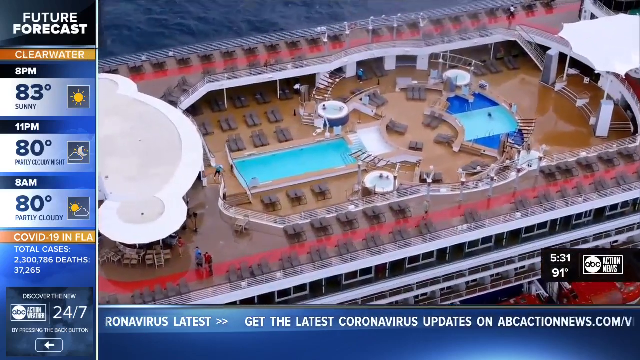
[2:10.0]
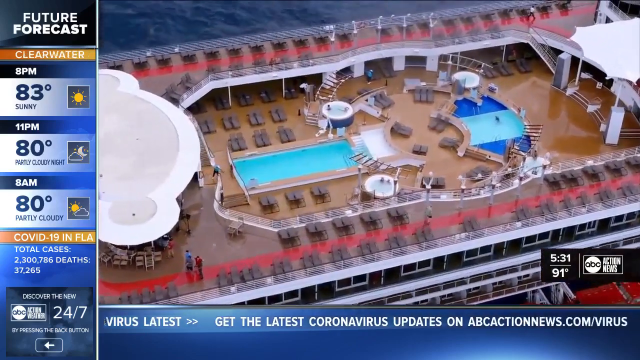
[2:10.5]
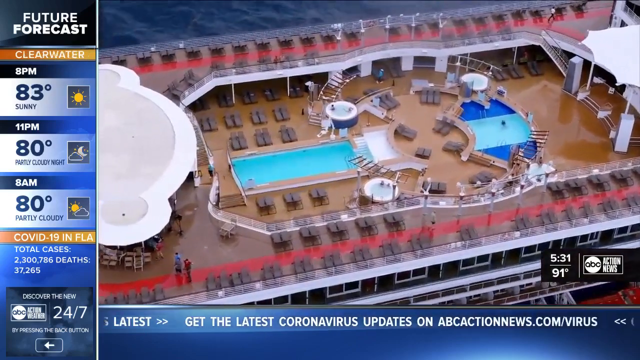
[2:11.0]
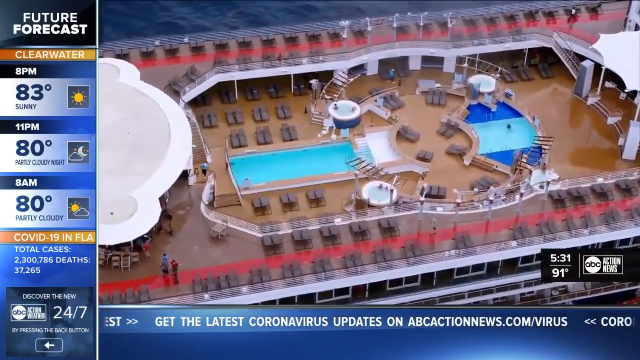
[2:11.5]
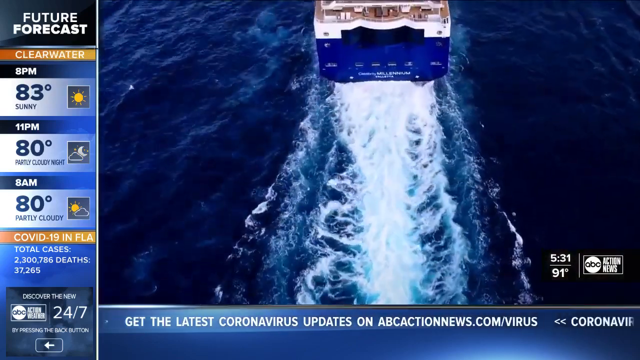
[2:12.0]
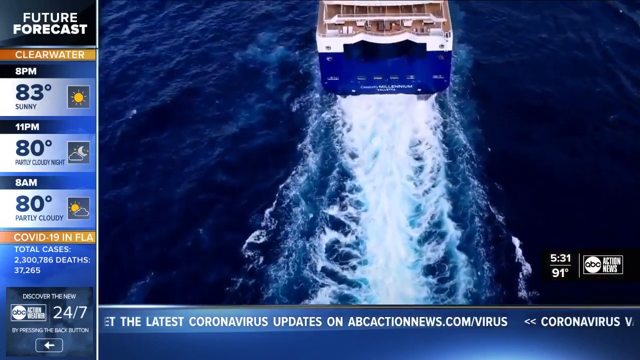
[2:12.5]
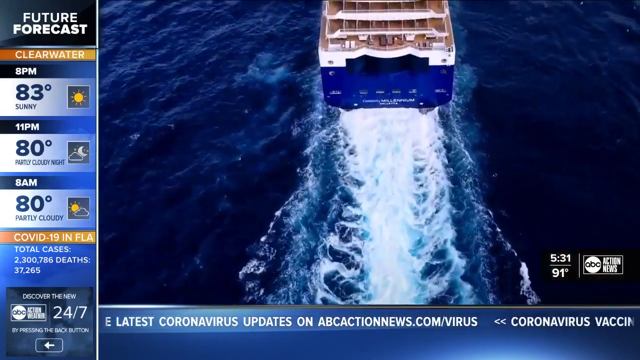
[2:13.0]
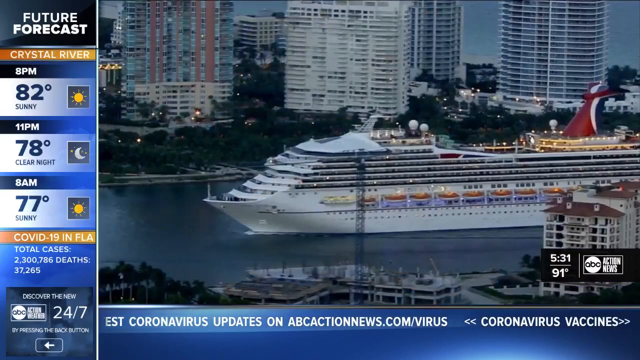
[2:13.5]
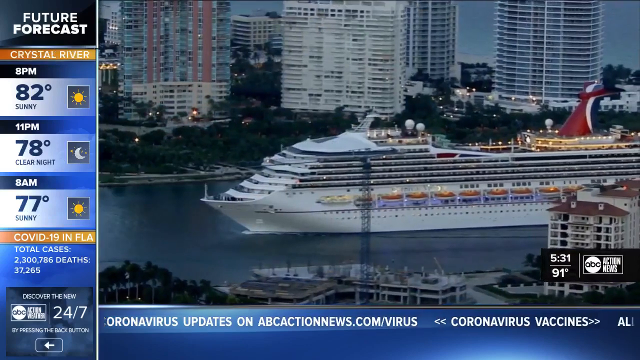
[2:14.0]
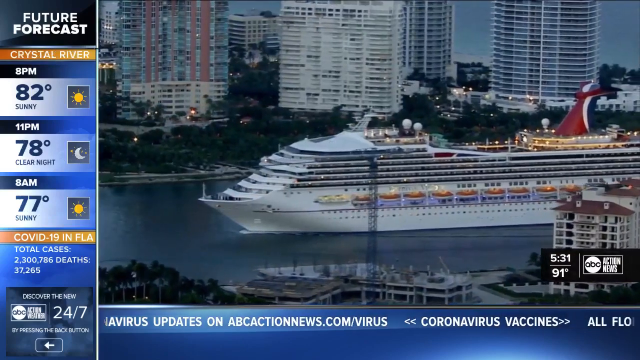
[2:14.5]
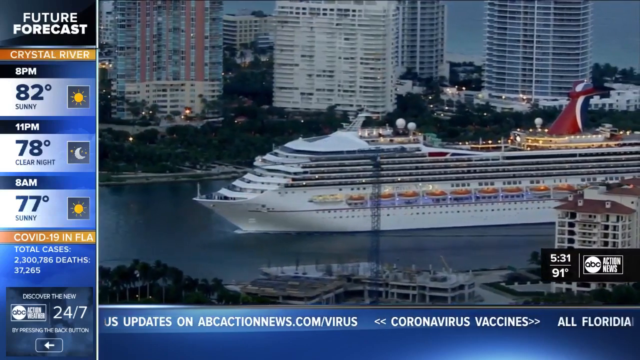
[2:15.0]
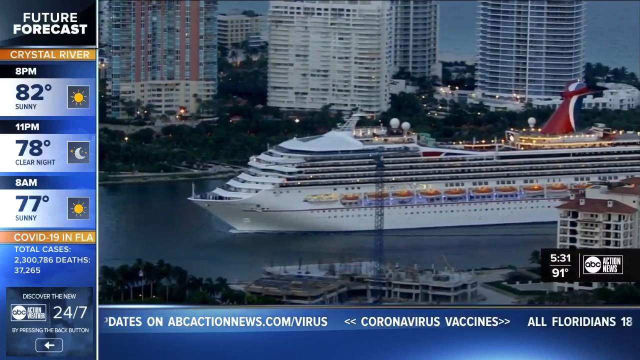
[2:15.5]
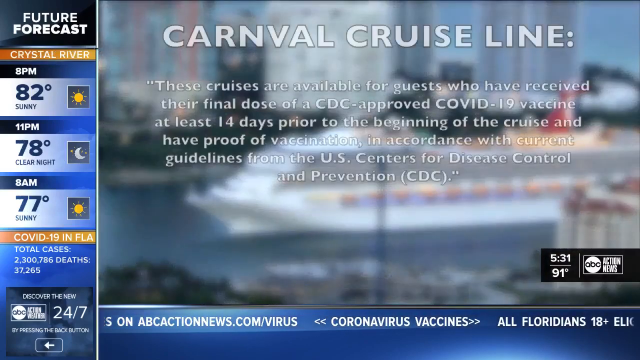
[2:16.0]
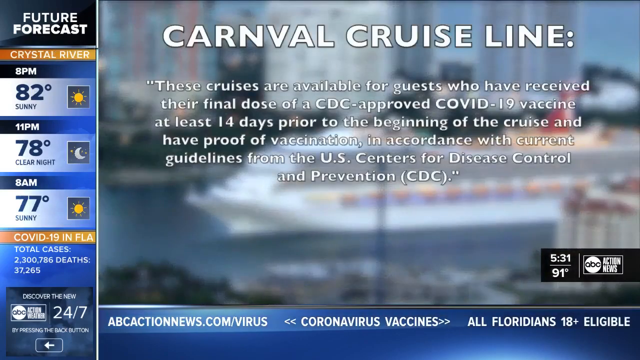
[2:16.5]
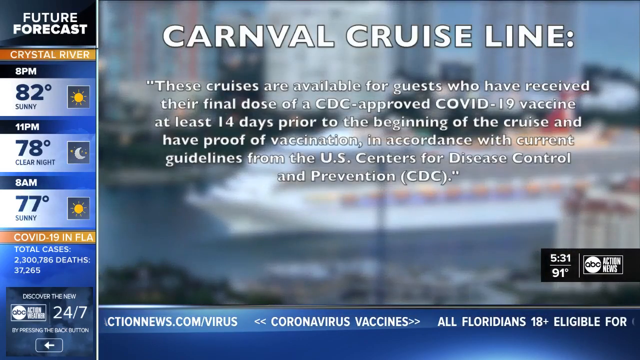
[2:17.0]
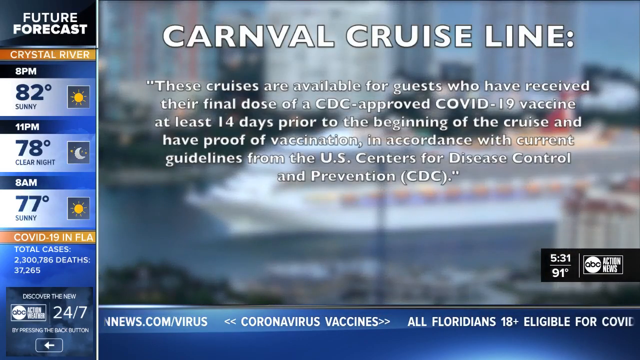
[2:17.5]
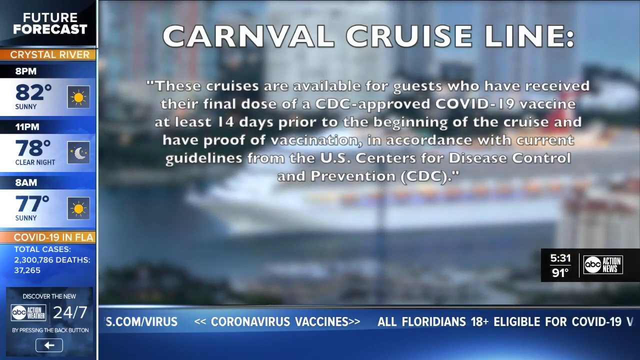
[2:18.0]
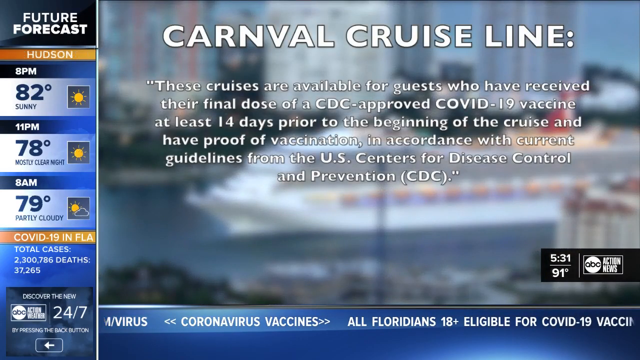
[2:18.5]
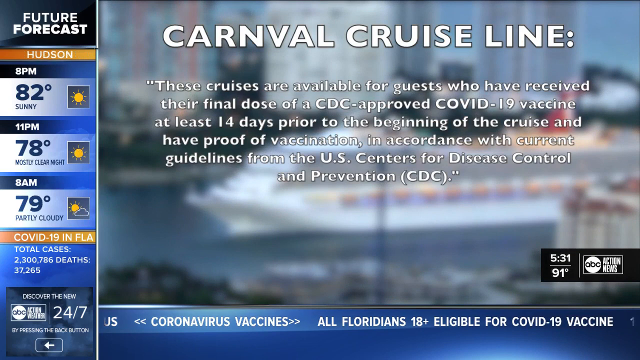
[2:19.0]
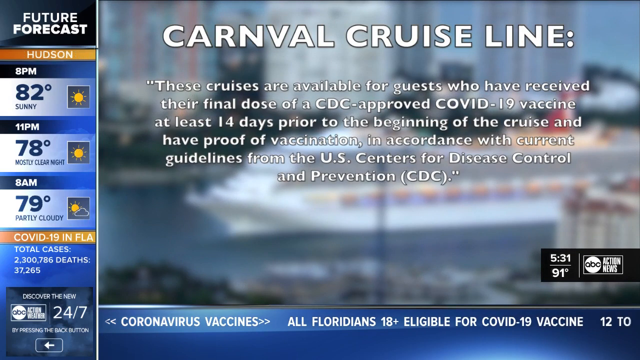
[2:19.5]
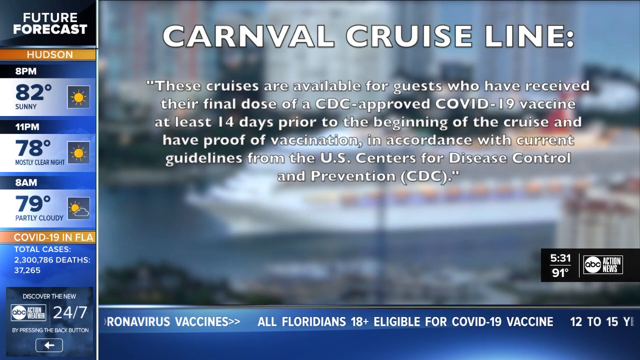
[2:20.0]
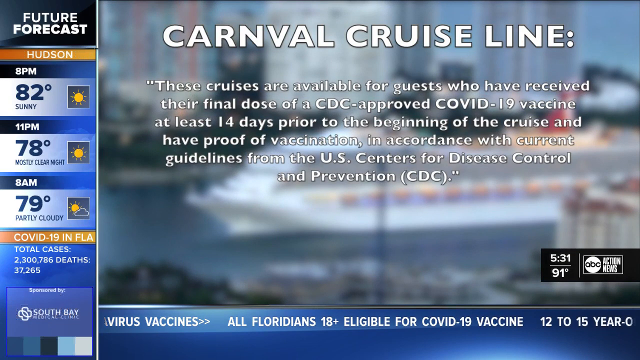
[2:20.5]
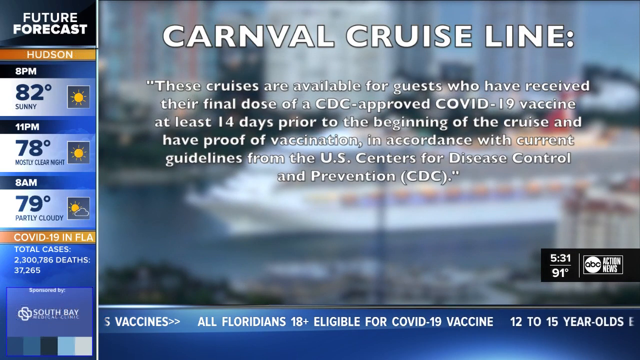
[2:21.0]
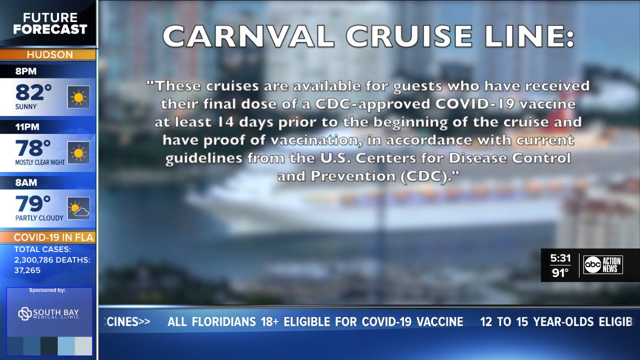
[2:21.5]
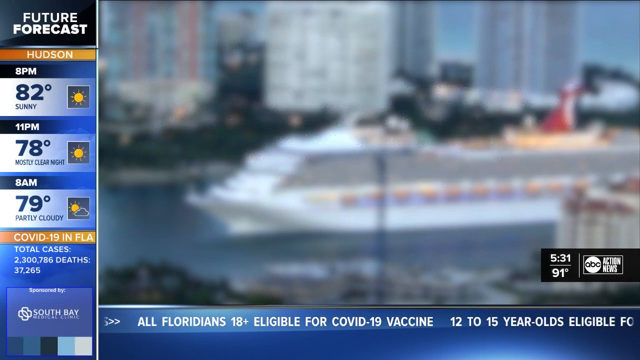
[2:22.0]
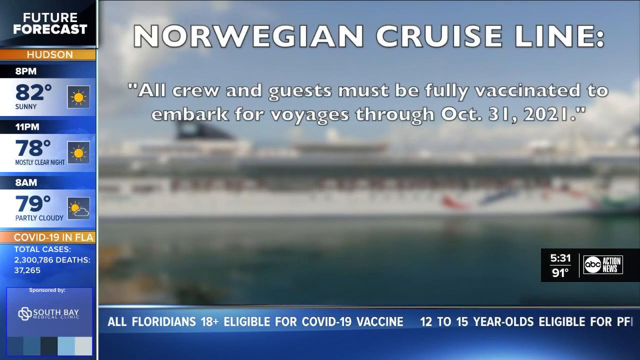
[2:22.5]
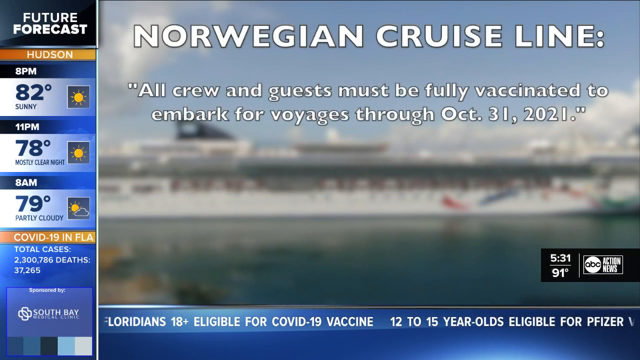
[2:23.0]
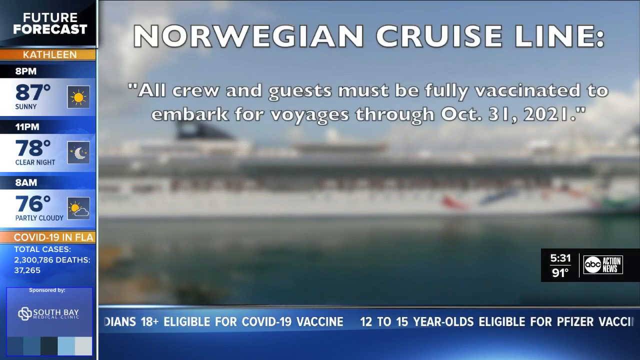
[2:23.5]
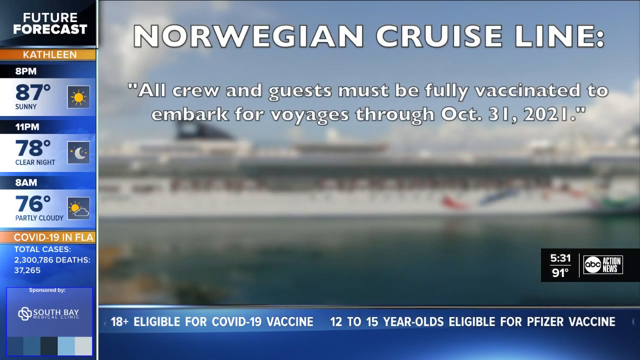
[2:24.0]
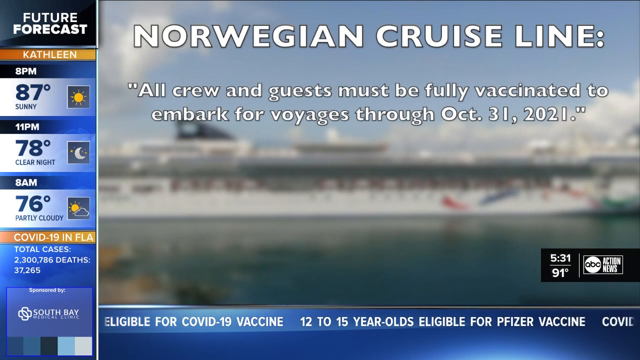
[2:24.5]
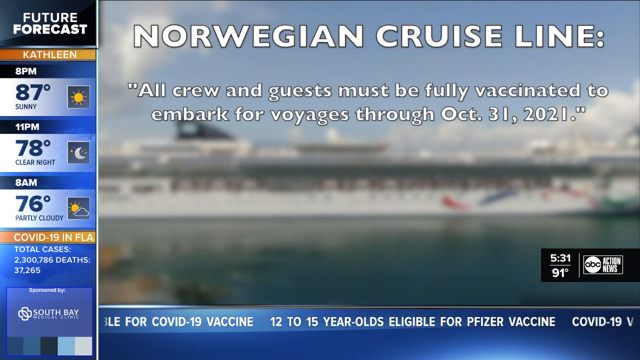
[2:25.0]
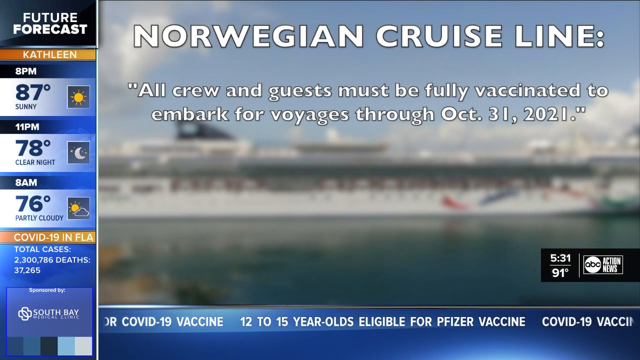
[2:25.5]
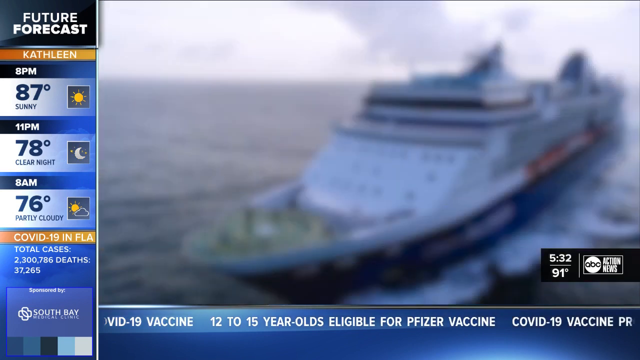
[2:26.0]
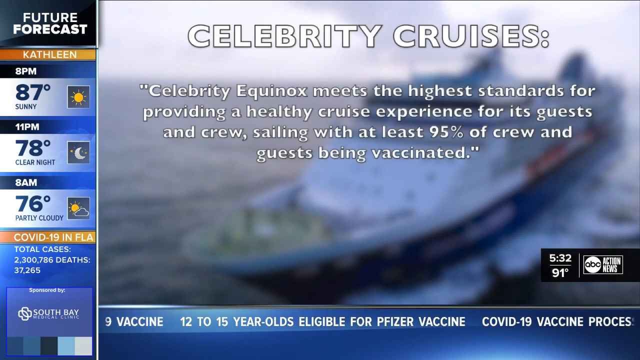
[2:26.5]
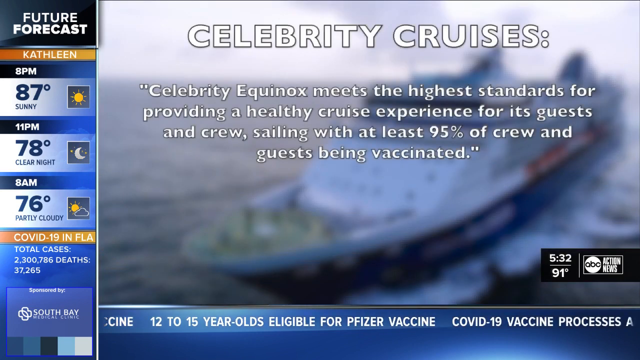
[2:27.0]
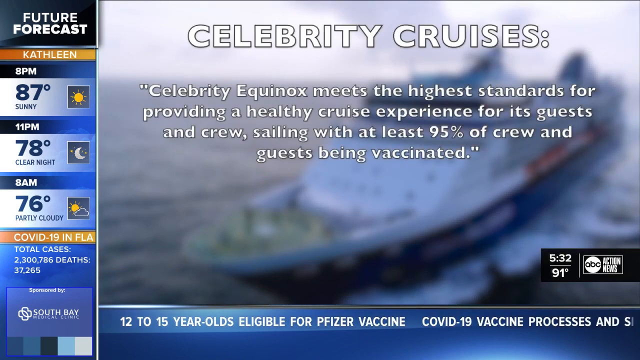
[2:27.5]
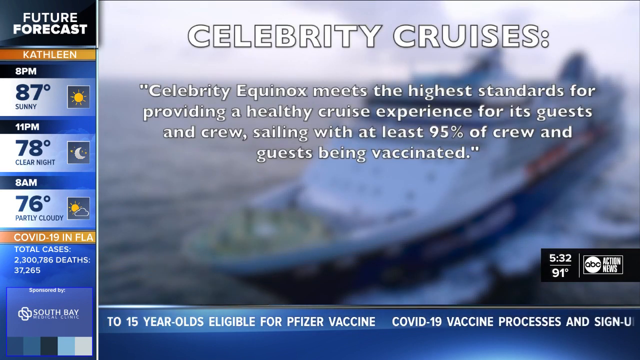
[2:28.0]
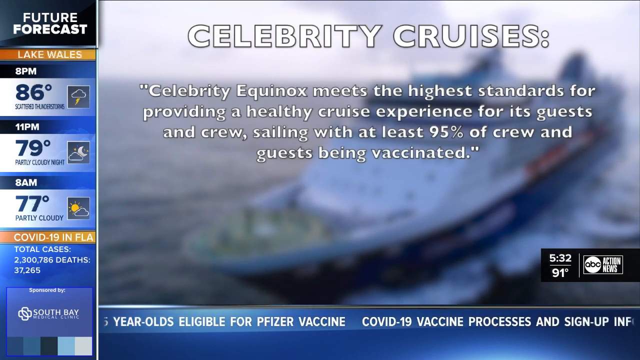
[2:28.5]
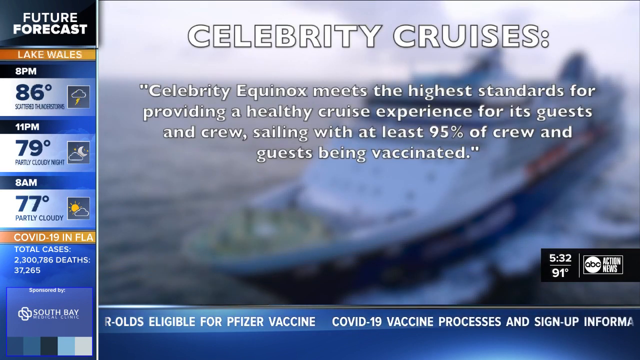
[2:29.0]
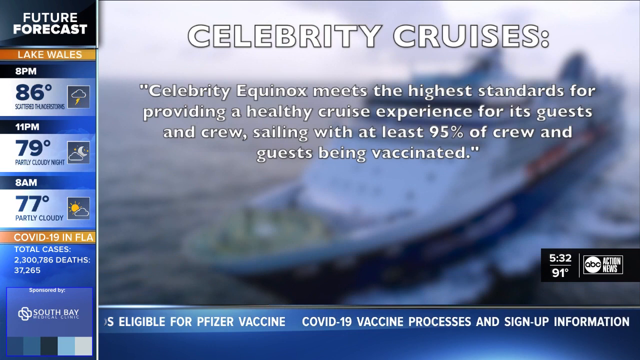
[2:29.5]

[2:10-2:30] The text "Carnival Cruise Line" appears with the statement "These cruises are available for guests who have received their final dose of a CDC approved COVID-19 vaccine at least 14 days prior to the beginning of the cruise and have proof of vaccination in accordance with current guidelines from the U.S. Centre for Disease Control and Prevention (CDC)". Next comes "Norwegian Cruise Line": "all crew and guests must be fully vaccinated to embark for voyages through October 31st, 2021". Then "Celebrity Cruises": "Celebrity Equinox meets the highest standards for providing a healthy cruise experience for its guests and crew, sailing with at least 95% of crew and guests being vaccinated". The quotes end with the aerial picture from the beginning, the lounge area with a pool on top.